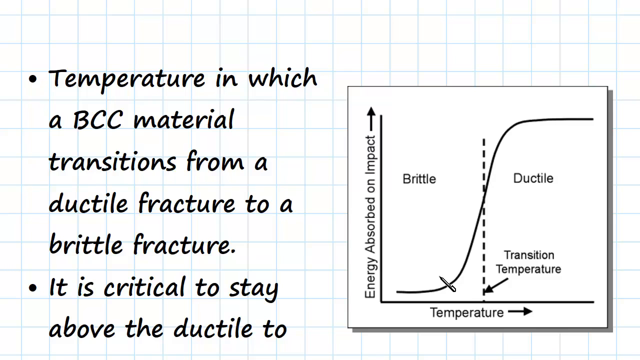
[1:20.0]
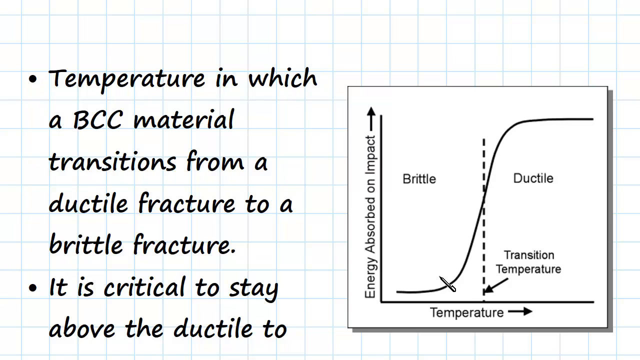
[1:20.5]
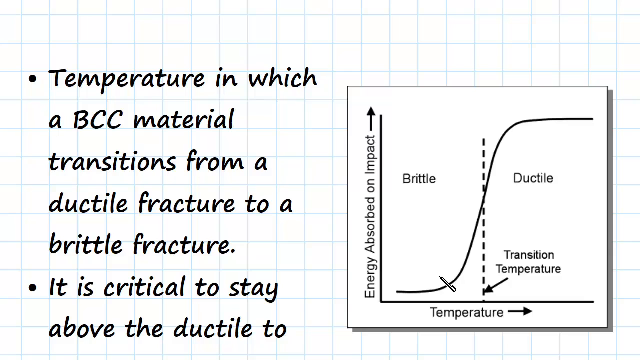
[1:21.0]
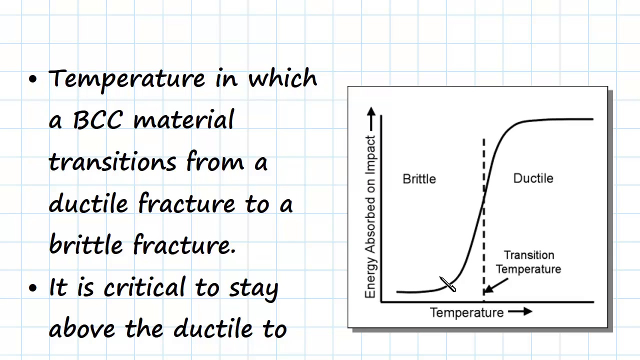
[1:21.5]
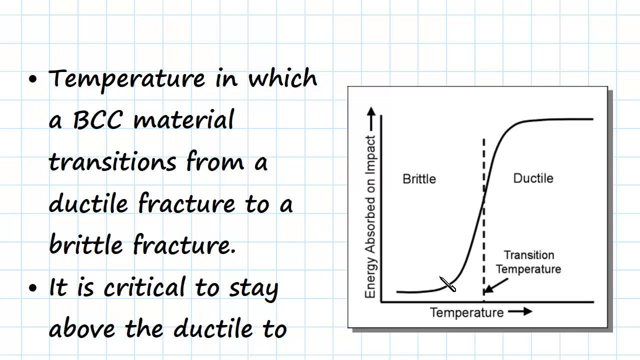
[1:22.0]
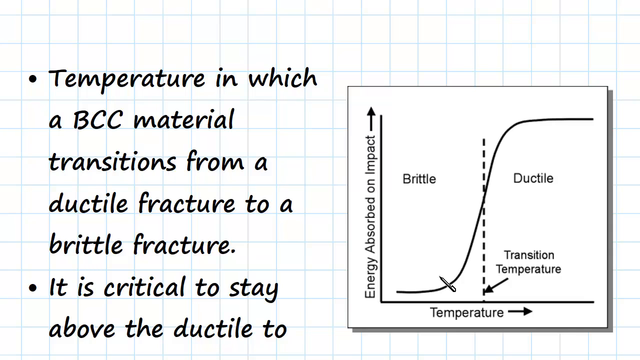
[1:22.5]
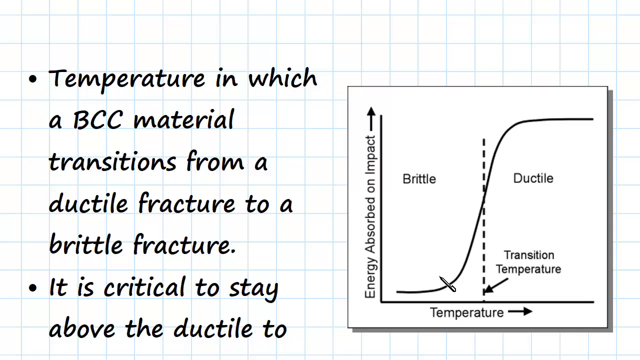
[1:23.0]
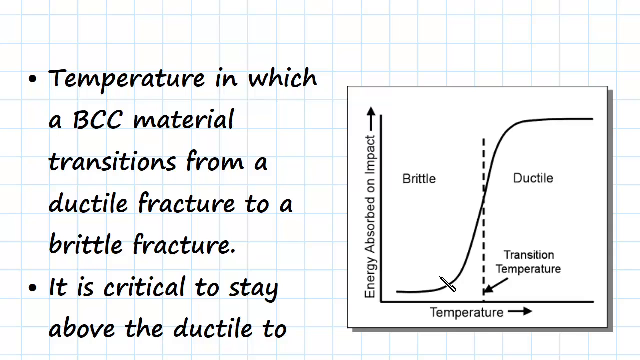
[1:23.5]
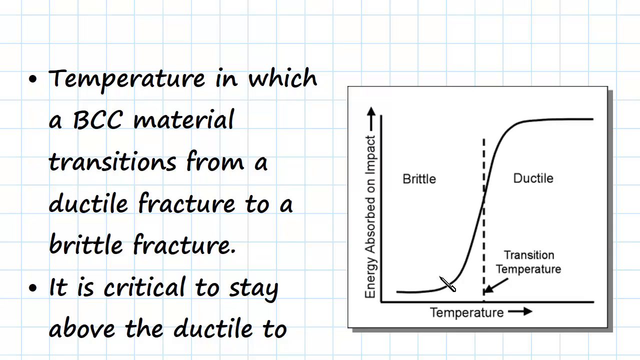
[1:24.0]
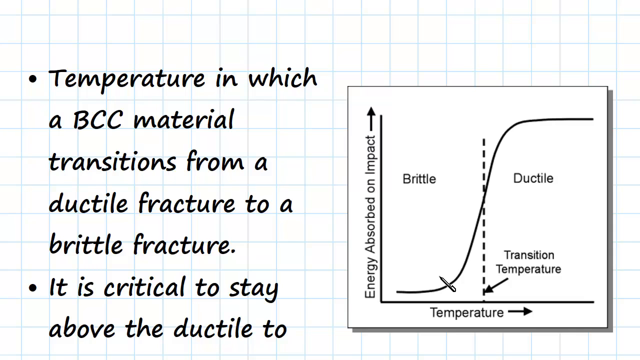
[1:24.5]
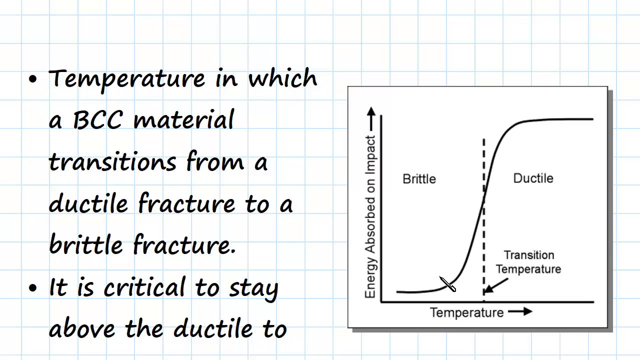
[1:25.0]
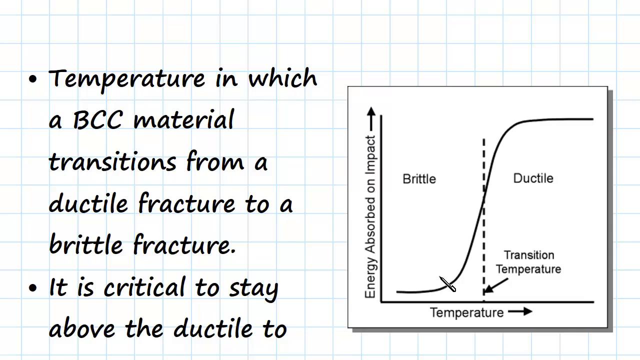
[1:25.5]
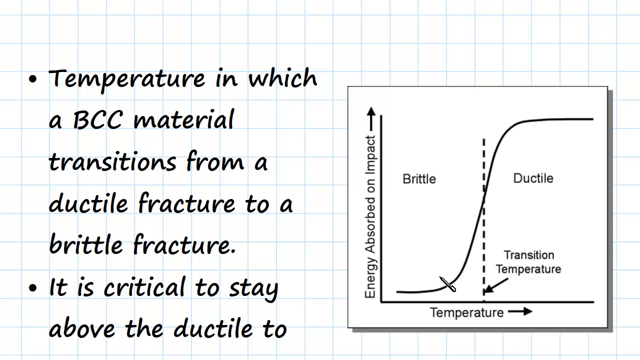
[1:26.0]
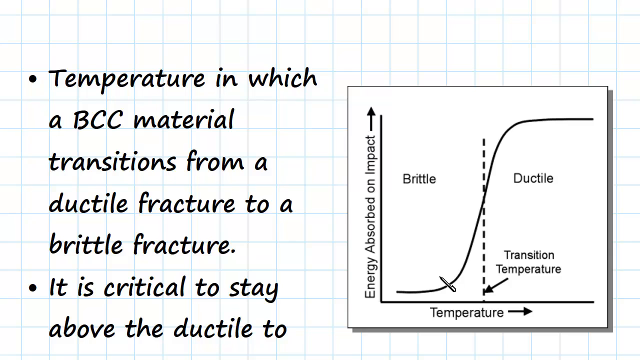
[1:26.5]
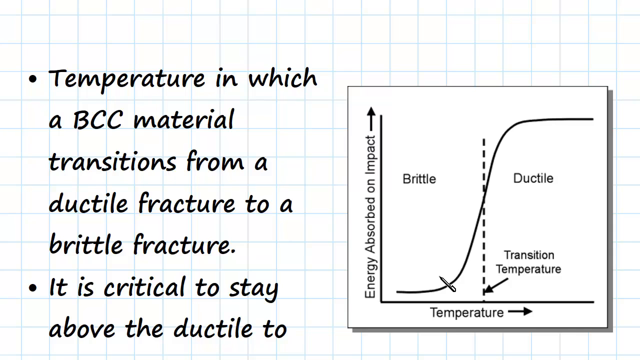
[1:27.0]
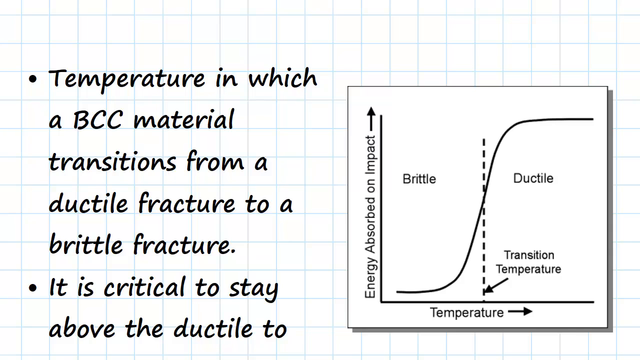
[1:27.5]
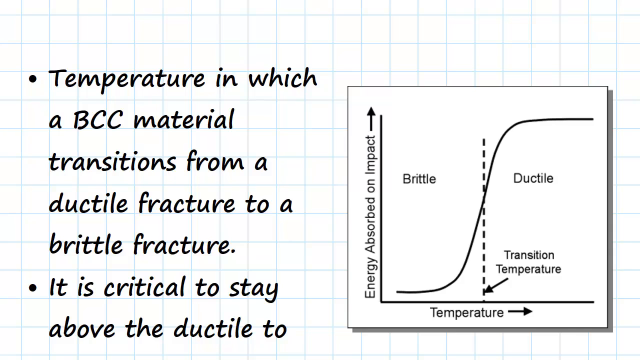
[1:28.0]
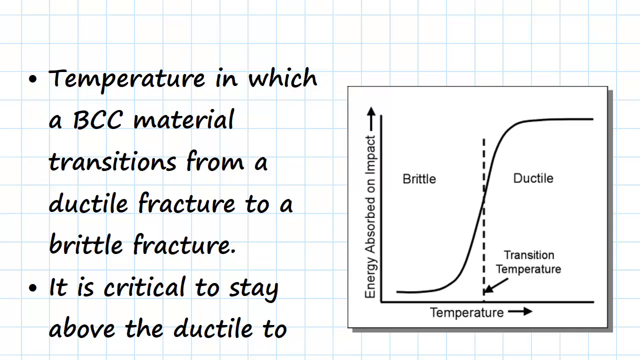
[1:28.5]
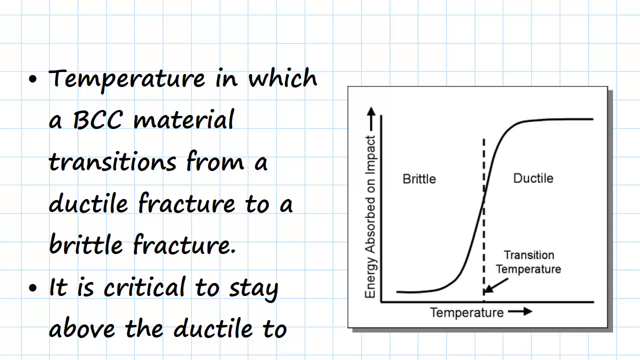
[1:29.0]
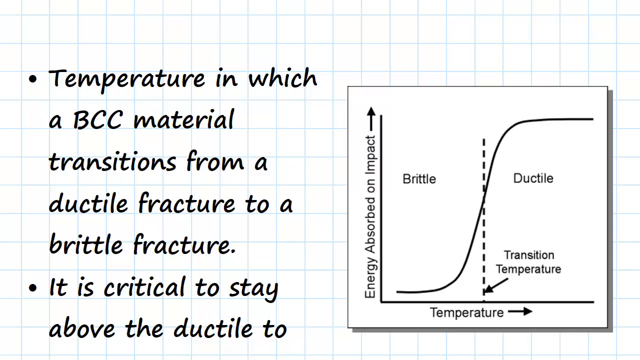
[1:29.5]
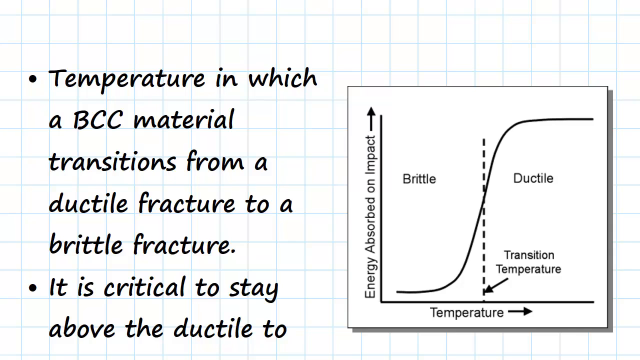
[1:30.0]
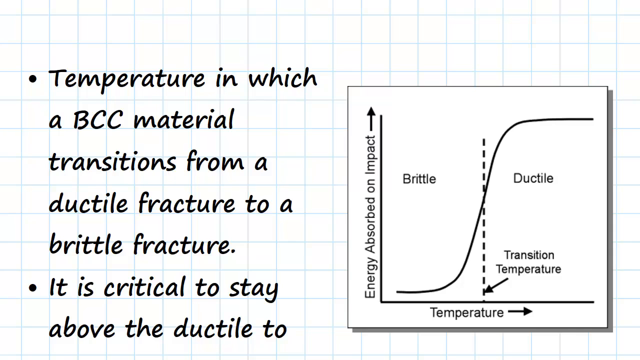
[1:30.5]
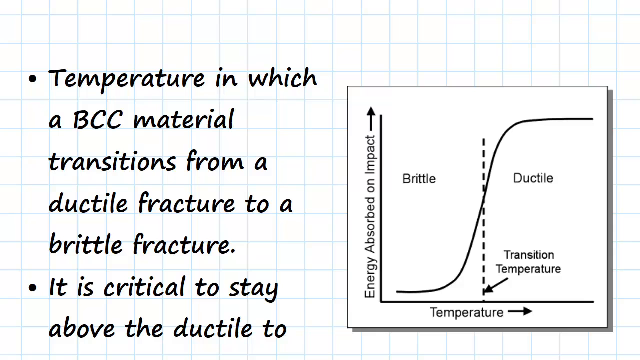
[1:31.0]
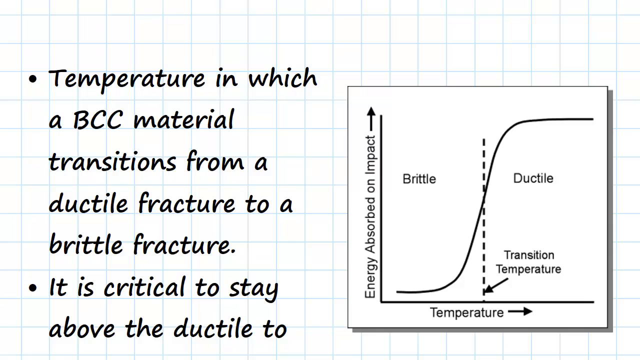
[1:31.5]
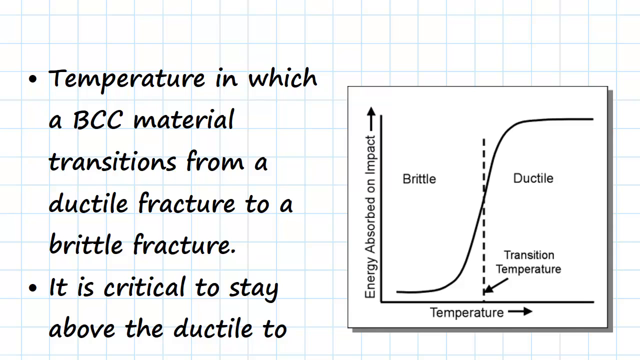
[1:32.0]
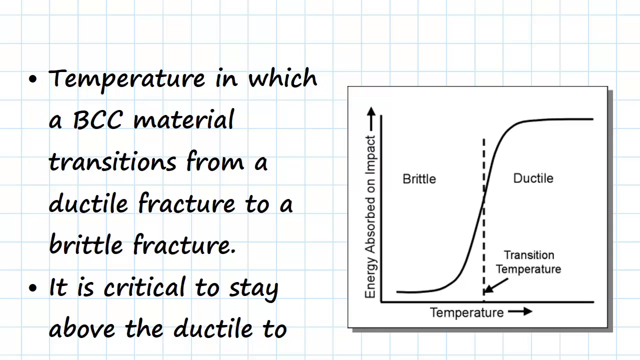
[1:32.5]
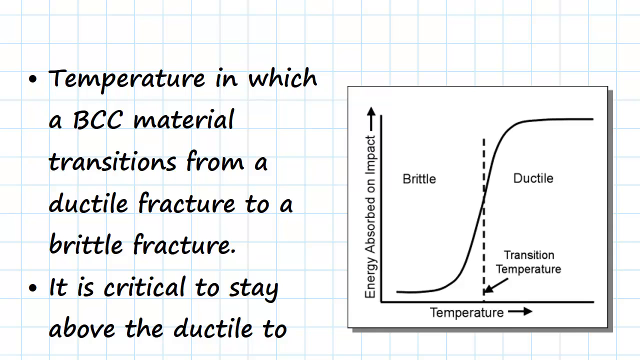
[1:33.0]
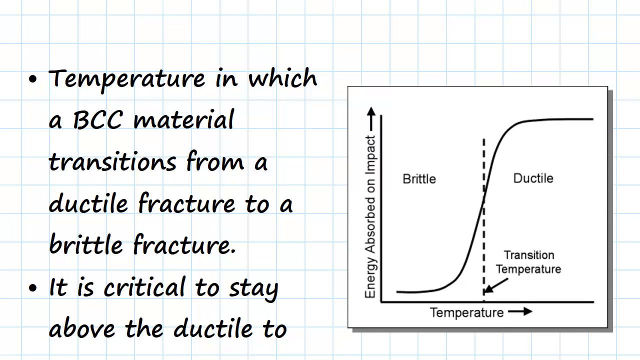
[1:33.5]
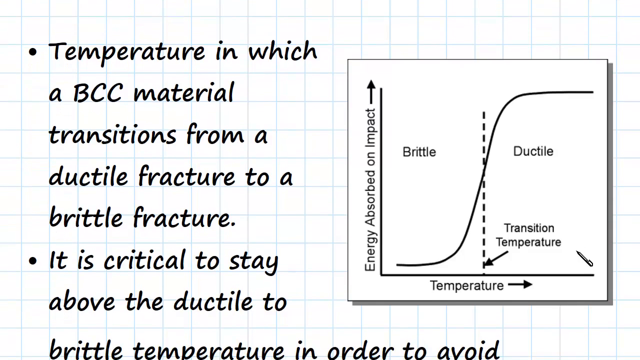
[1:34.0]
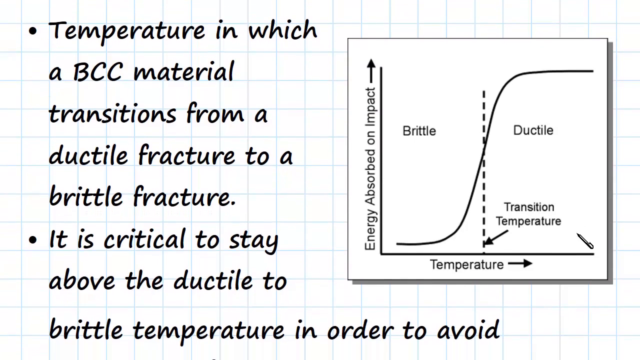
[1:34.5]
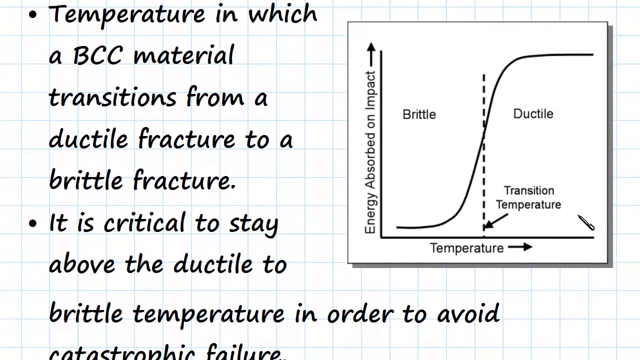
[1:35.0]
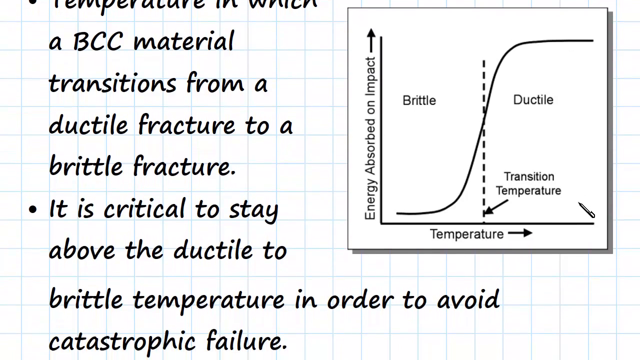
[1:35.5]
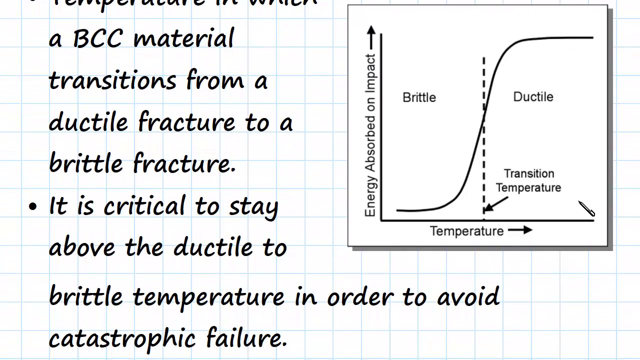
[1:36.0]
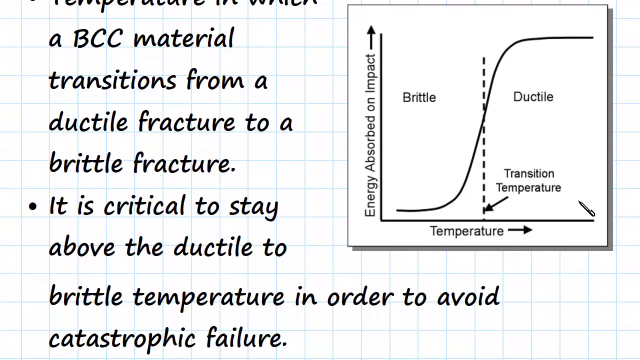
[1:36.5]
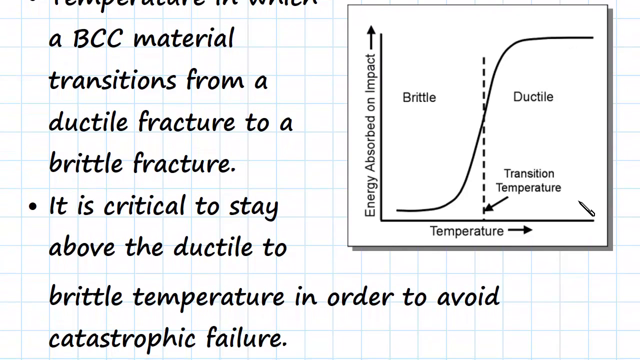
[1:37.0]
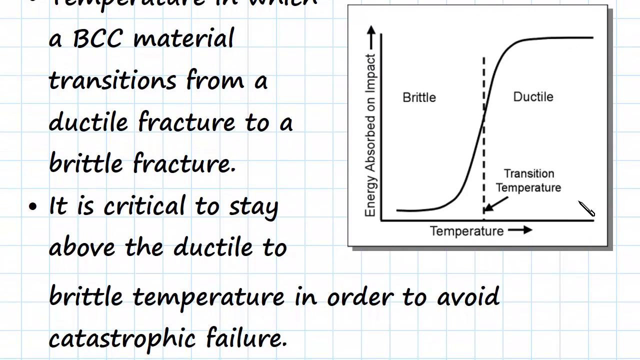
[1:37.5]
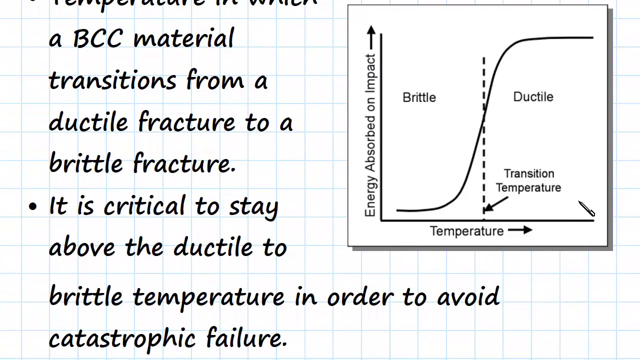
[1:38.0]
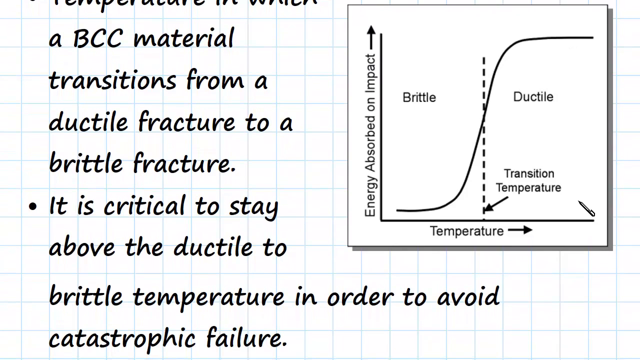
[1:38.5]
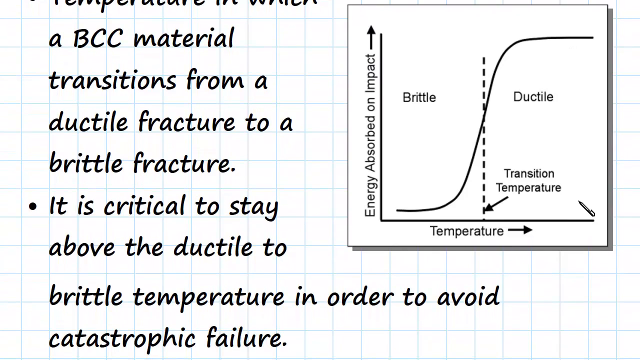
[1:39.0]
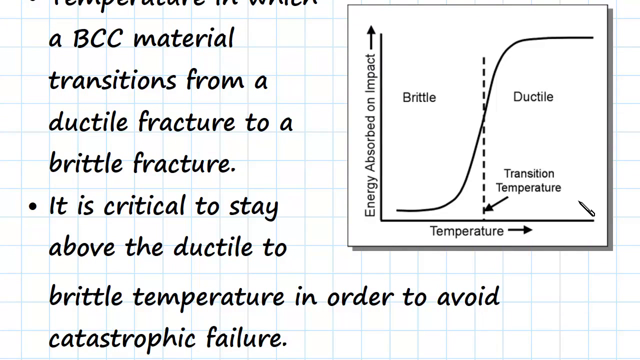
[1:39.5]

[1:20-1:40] On the white grid background with blue lines, the words "temperature in which a BCC material transitions from a ductile fracture to a brittle fracture" are on the screen, and below them "it is critical to stay above the ductile to brittle temperature in order to avoid catastrophic failure". To the right is a line graph representing those words. On its left-hand side are the words "energy absorbed on impact" with an arrow pointing up above them. On the bottom line is the word "temperature" with an arrow pointing right. In the middle left of the graph is the word "brittle", dashes separate the middle, and on the right side is the word "ductile". Below that, the words "transition temperature" have an arrow pointing at the bottom of the graph. The line slowly goes up, then takes a steep turn straight up and goes to the right. A mouse pointer in the shape of a pen points at certain sections of the graph, showing how the line goes up and down and where the transition temperature is in the middle.